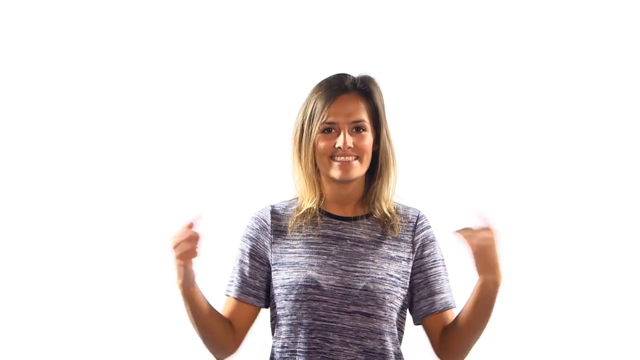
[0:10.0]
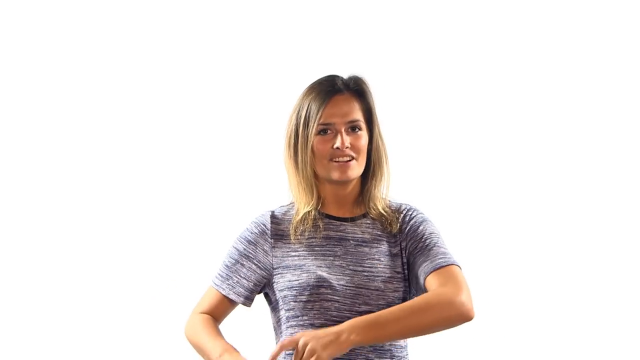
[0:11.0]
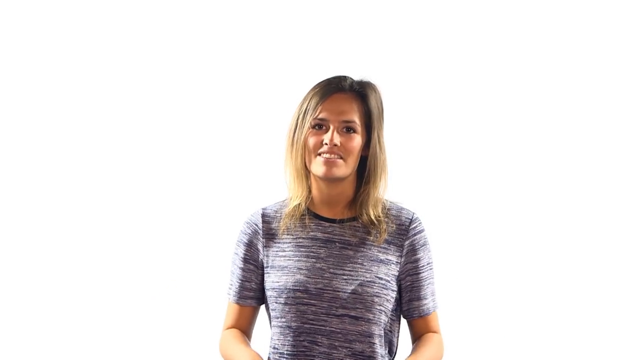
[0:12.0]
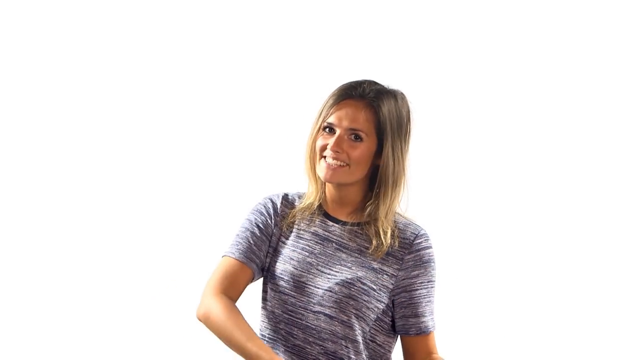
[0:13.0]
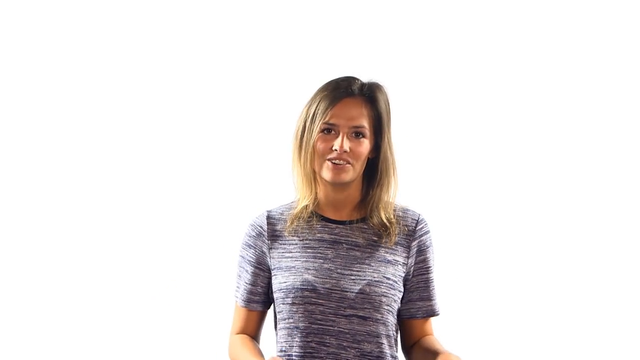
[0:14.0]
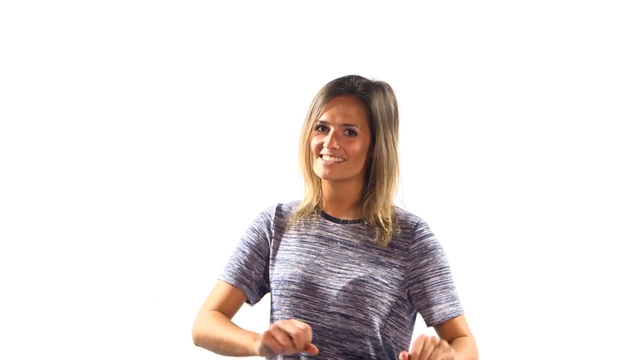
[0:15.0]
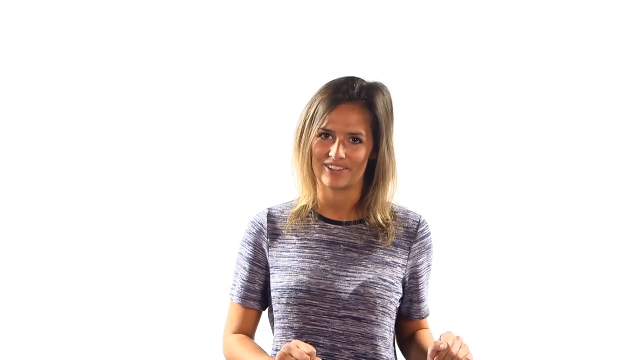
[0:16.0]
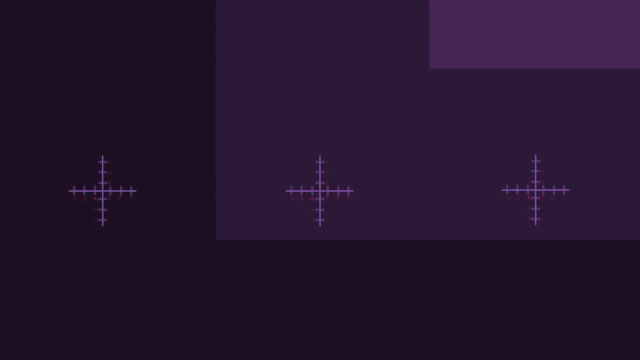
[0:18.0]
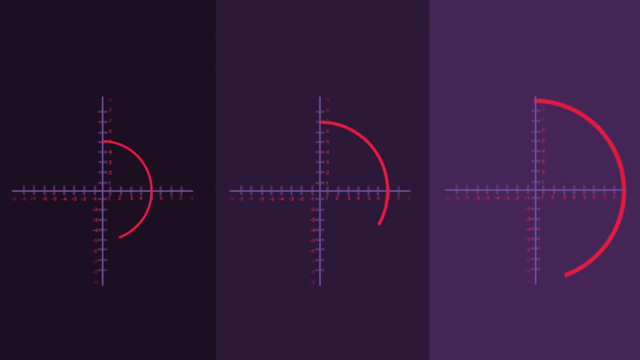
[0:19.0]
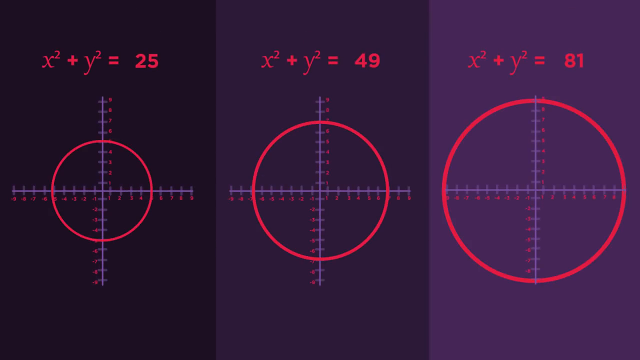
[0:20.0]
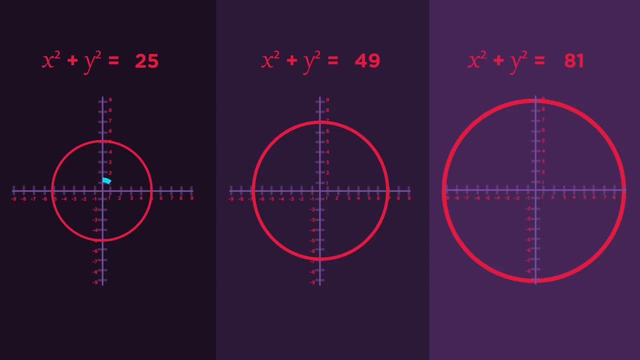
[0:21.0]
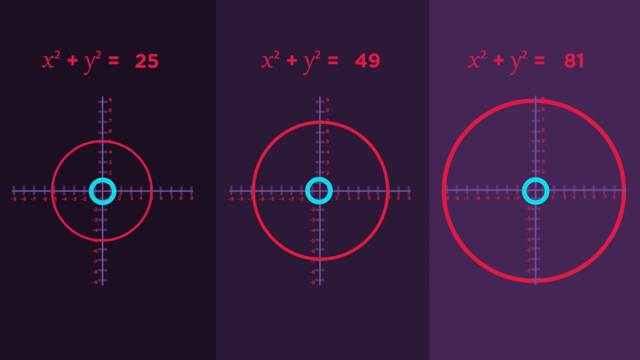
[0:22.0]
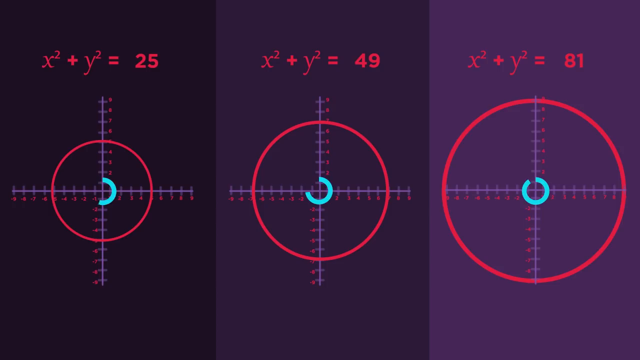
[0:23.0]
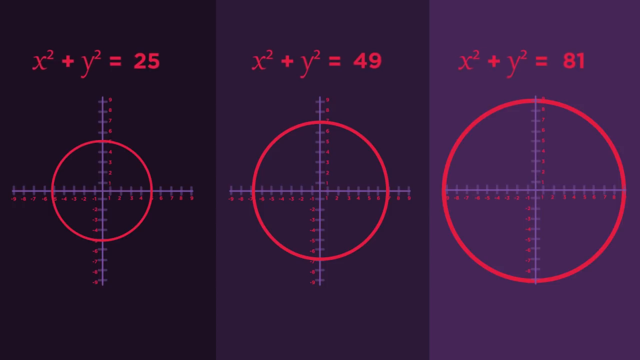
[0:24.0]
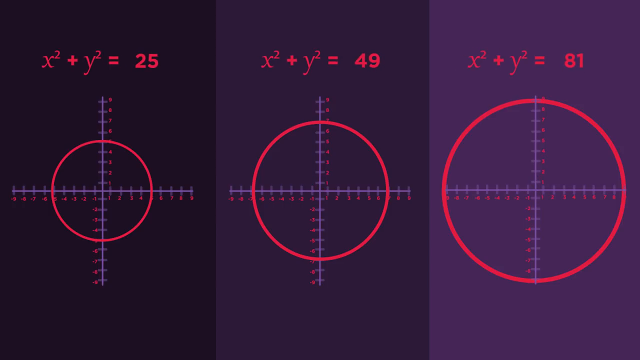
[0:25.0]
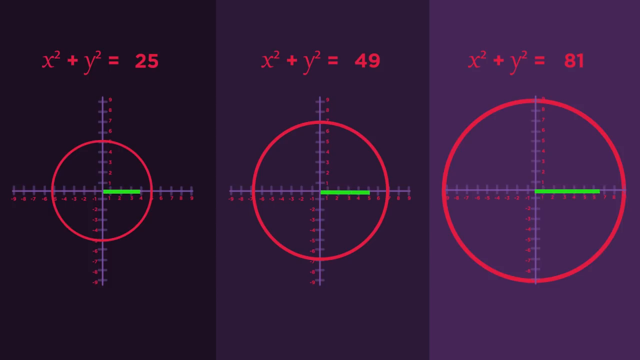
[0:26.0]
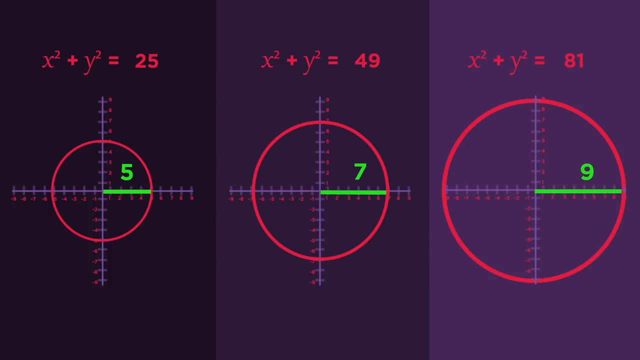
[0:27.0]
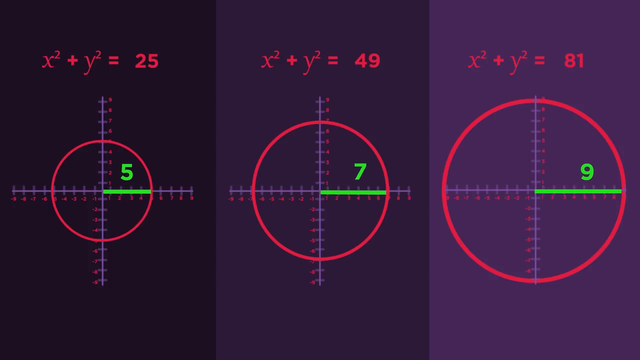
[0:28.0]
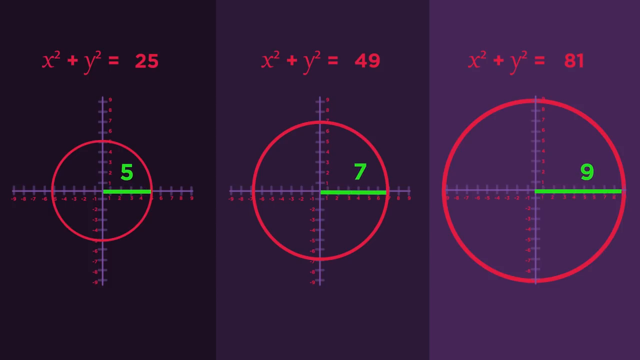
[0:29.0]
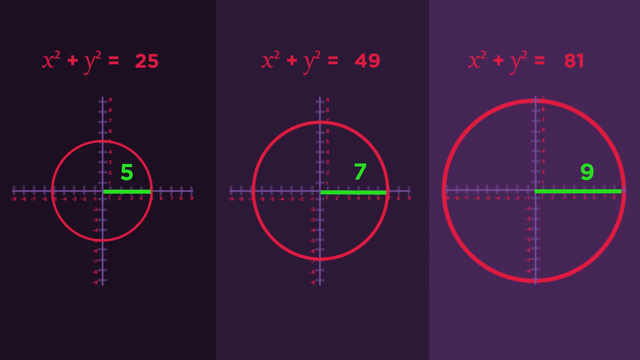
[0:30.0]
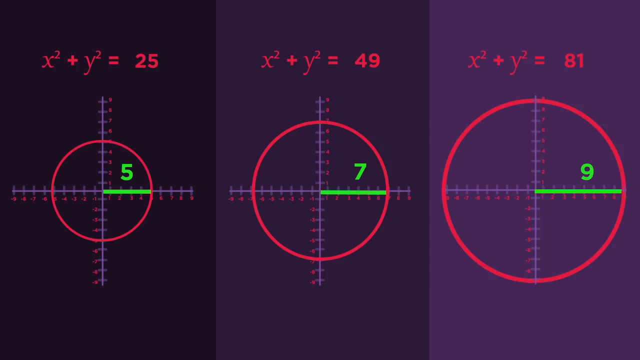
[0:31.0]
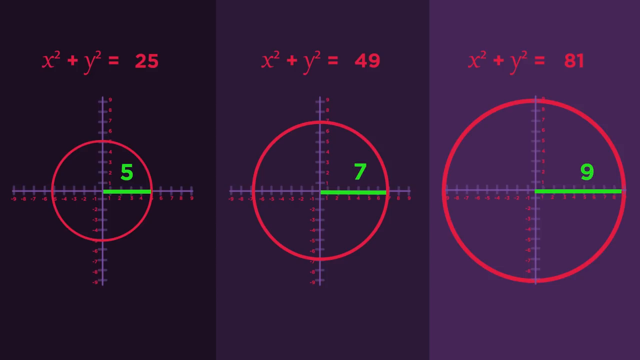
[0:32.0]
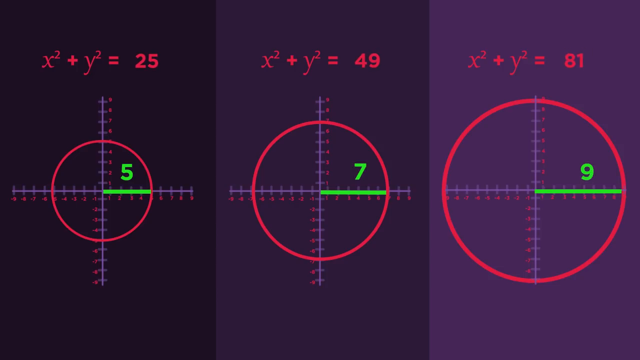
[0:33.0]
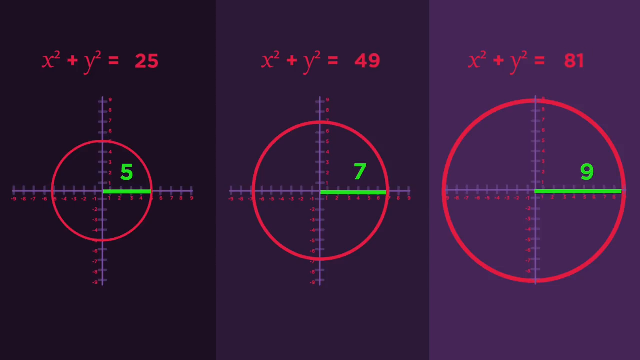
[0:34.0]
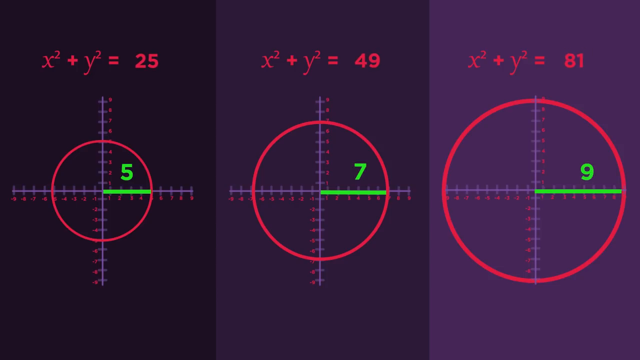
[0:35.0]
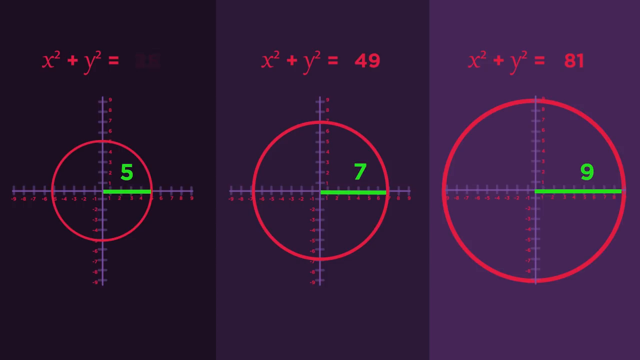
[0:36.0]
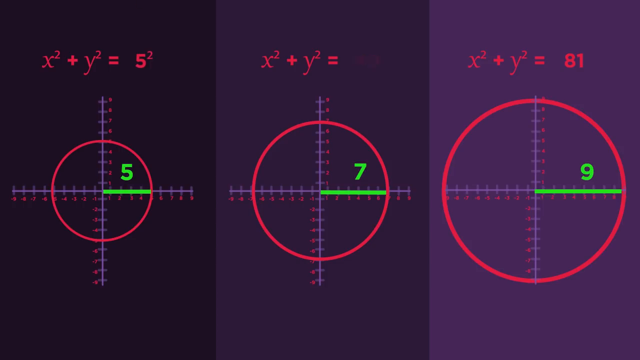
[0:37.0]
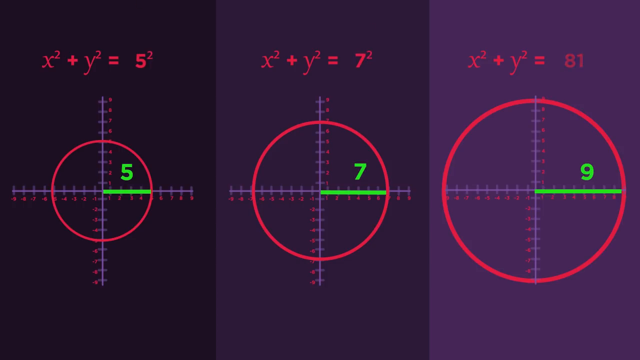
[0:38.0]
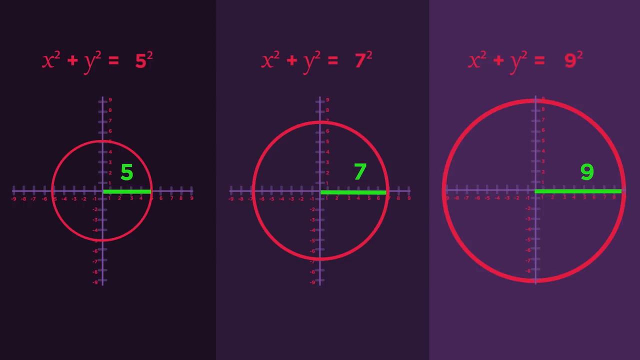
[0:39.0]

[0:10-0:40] The woman is perhaps explaining steps to the math problems, using arm movements to indicate steps and making sweeping movements with her arms. Three red circles of gradually increasing size then appear on a graph against a dark, somewhat purplish background, with purple graph lines and red points on the x-y axis. Above each circle is an equation: x² + y² = 25 above the smallest circle, x² + y² = 49 above the middle one, and x² + y² = 81 above the third. A green circle appears around the center of each circle at the crossing point of the x and y axes, then disappears, and a line comes in to mark the radius from the zero point of the graph to the outside of the circle. On the smallest circle this line is green. The length of each radius is placed above it: 5 for the smallest circle, 7 for the medium-sized circle and 9 for the largest, and the value in each equation ends up being the square of the radius.